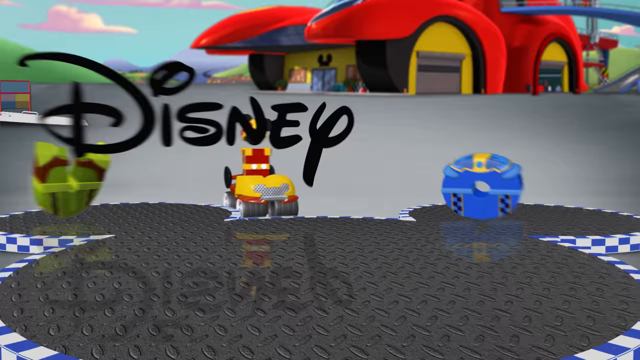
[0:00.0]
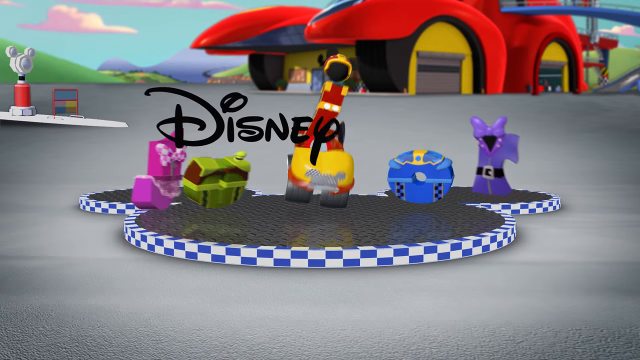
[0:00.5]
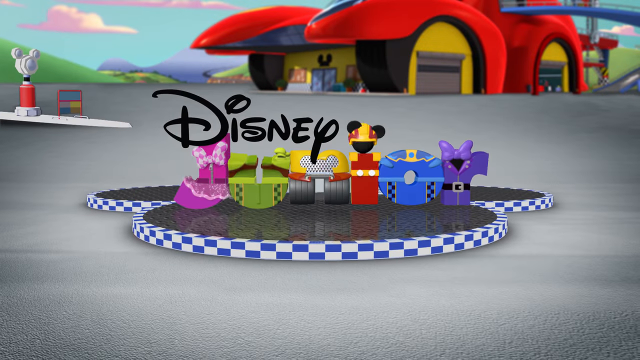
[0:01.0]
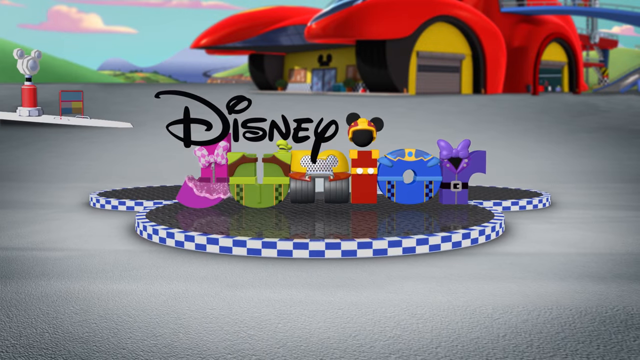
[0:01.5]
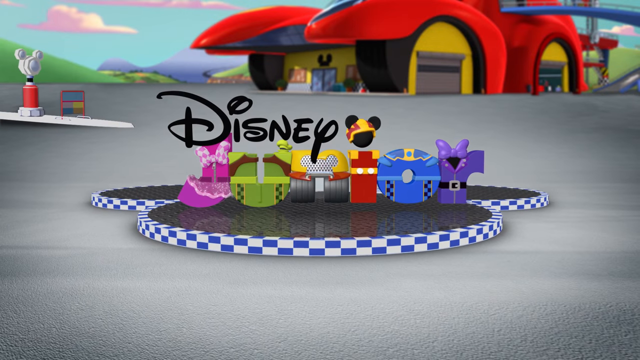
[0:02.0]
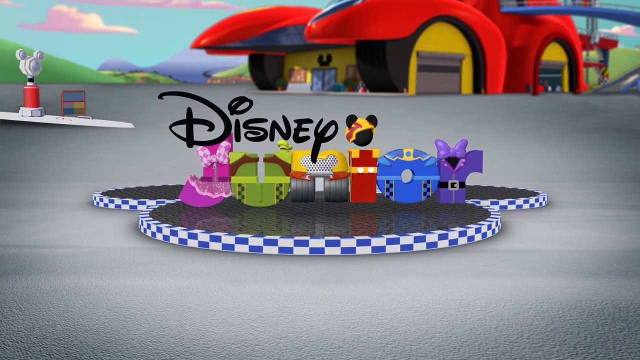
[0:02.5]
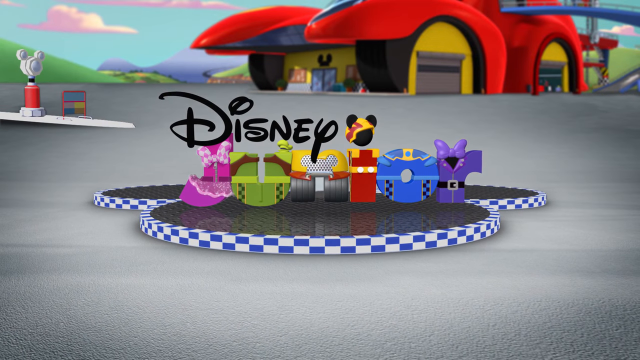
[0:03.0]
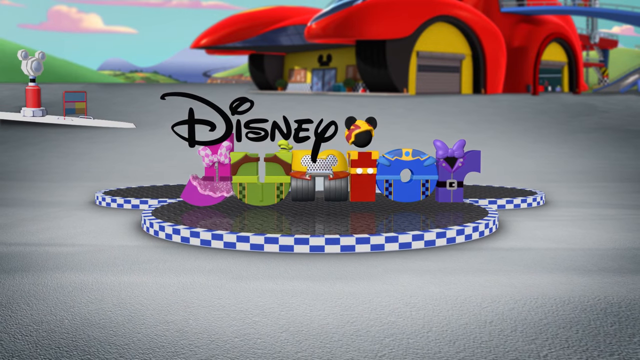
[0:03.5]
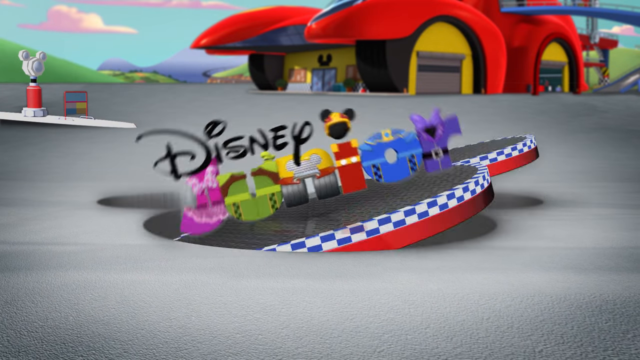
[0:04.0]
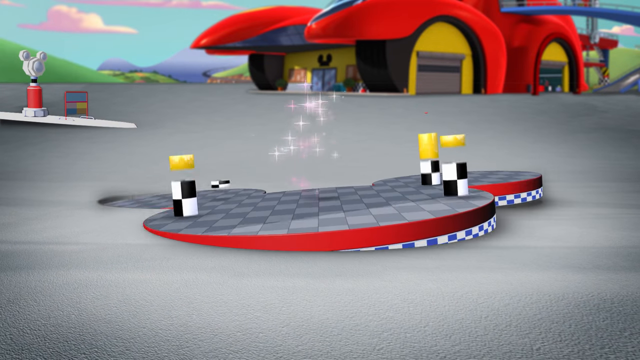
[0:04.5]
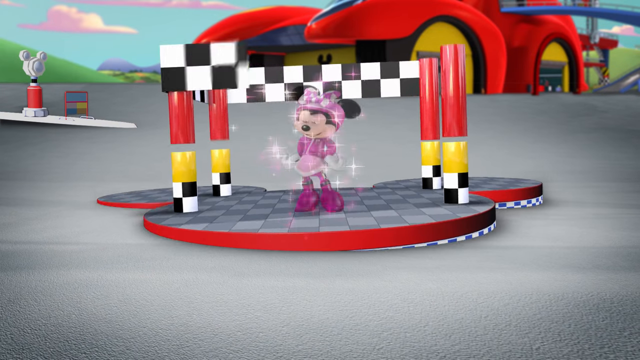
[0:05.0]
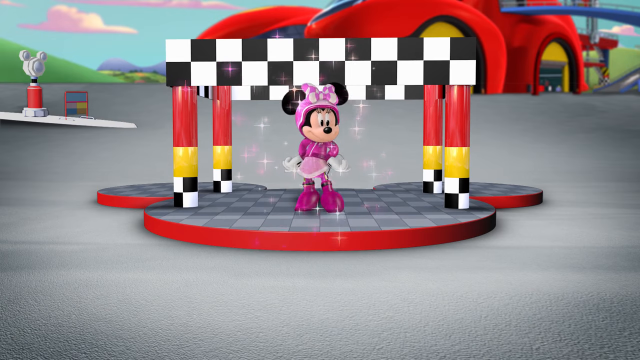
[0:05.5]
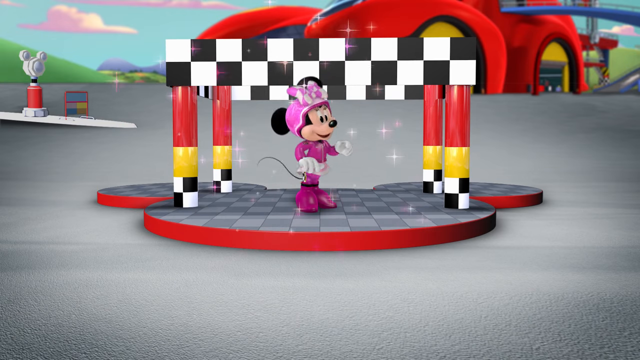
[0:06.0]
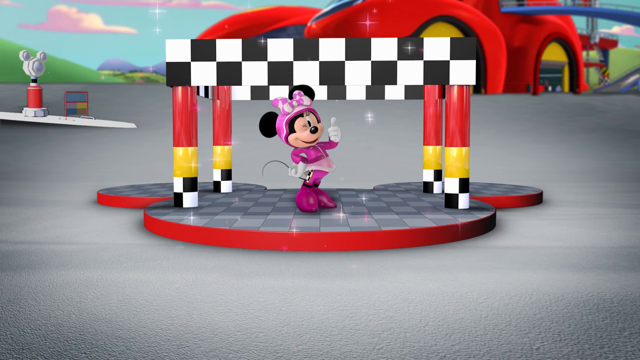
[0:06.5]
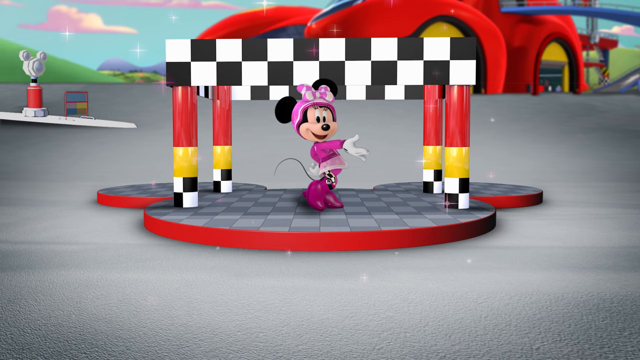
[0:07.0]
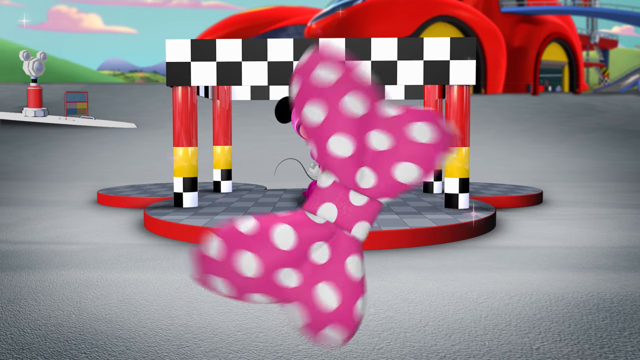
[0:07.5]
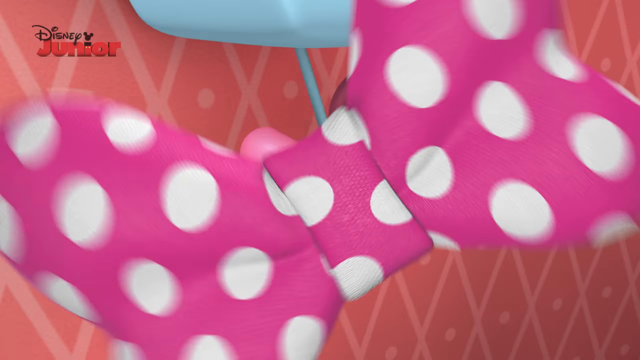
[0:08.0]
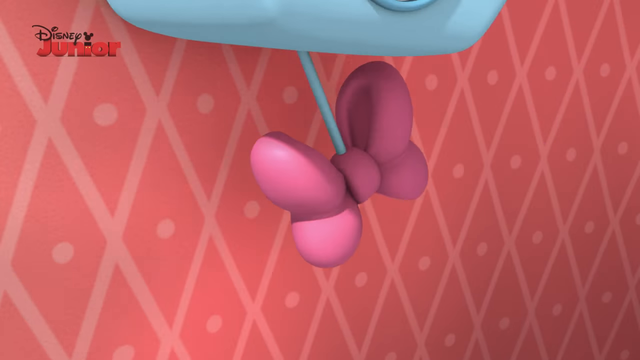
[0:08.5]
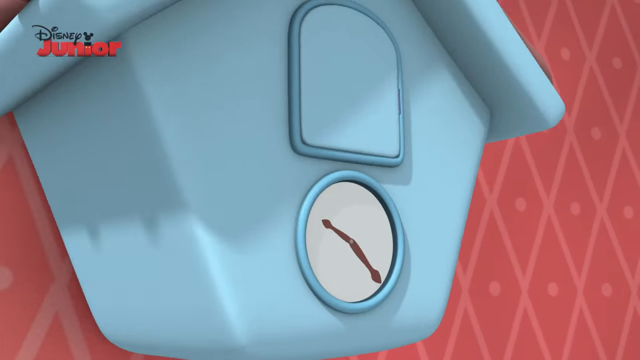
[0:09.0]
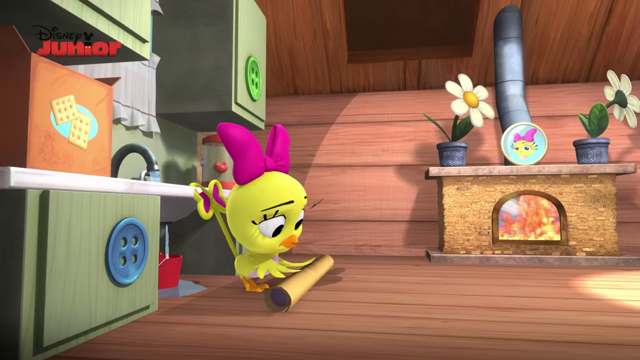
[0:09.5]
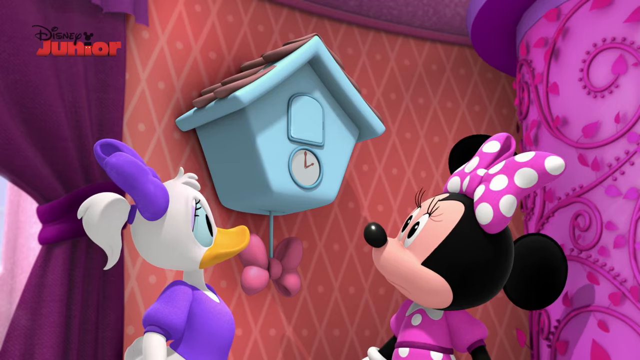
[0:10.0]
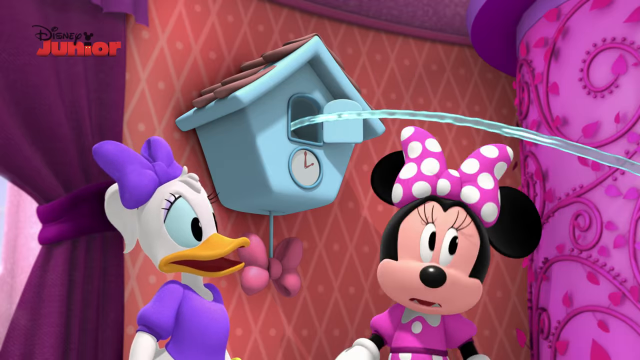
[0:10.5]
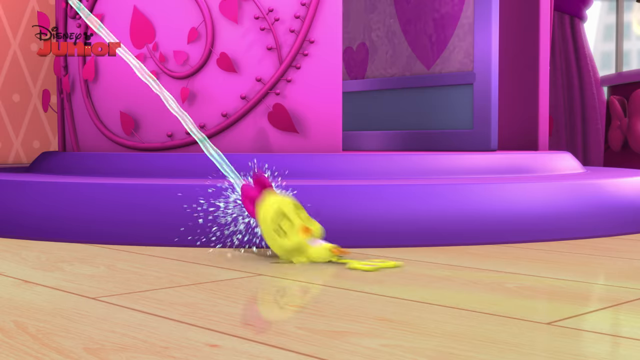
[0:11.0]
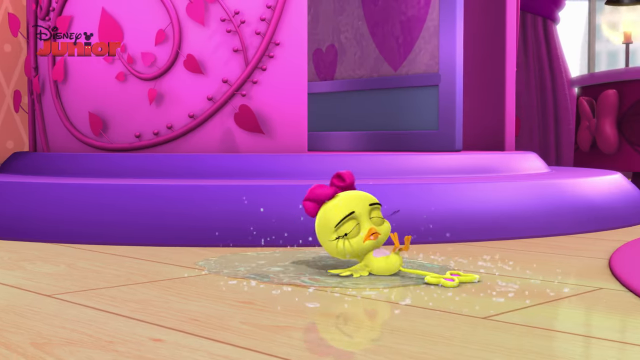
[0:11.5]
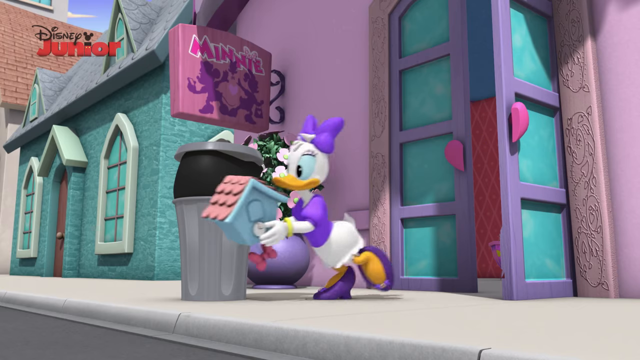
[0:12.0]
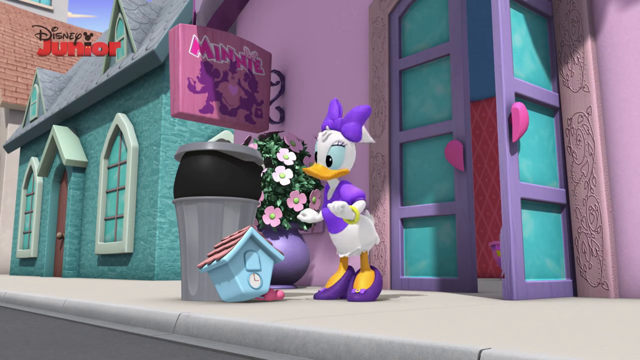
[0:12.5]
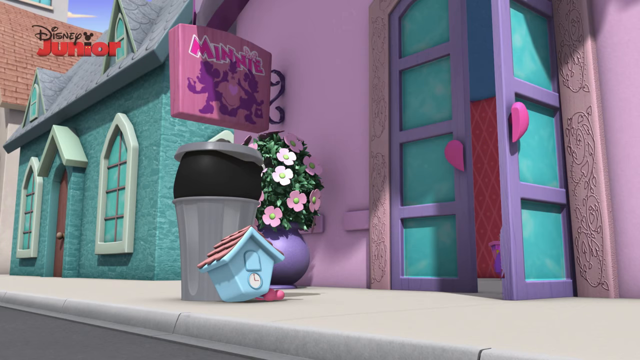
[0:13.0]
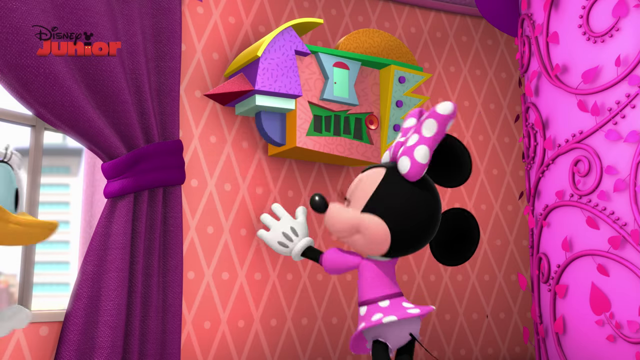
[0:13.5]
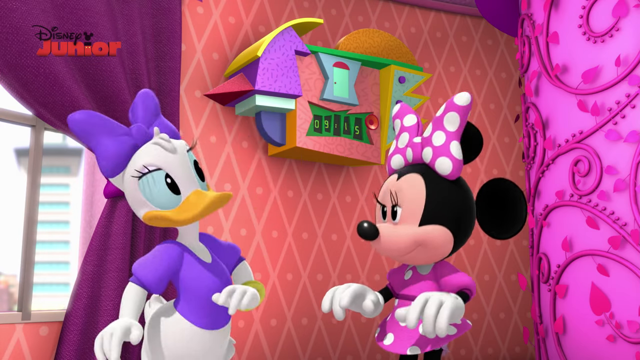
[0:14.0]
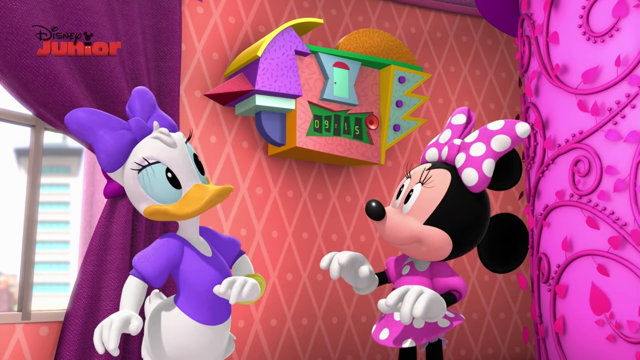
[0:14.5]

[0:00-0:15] The video is titled The Lost Cuckoo Clock. It opens with a logo: "Disney" written in a slightly curvy font above a flat platform shaped like Mickey's head, outlined in blue and white check. Standing on the platform is a group of sort of robot-like figures spelling out the word "Junior": the J is pink, the U green, the N yellow, the I red, the O blue and the R purple. The flat Mickey head rotates 180 degrees, sending the Junior figures down to the bottom, and a figure of Minnie in pink heels and a pink helmet rotates up, standing underneath a checkered flag. She gives a thumbs up. The view zooms in on a pink dotted bow tie, and the show begins with a blue clock shaking crazily, the hands on its front spinning wildly out of control. The clock shoots a stream of water at a yellow bird. The scene changes to Minnie Mouse and presumably Daisy Duck, who wears a purple bow, staring at the clock. A second stream of water juts out with a yellow bird riding it, so the clock is apparently broken. The little yellow bird hits the ground looking very sad and possibly injured. Daisy runs out of the house carrying the blue clock, places it on the ground next to a trash can, and runs back inside. Inside the house, Minnie has just finished hanging a new digital clock on the wall. It is very abstract, with all sorts of unusual shapes, quite colorful and very blocky, with five black rectangles on the front for numbers and a little cuckoo door, a much more modernized clock.